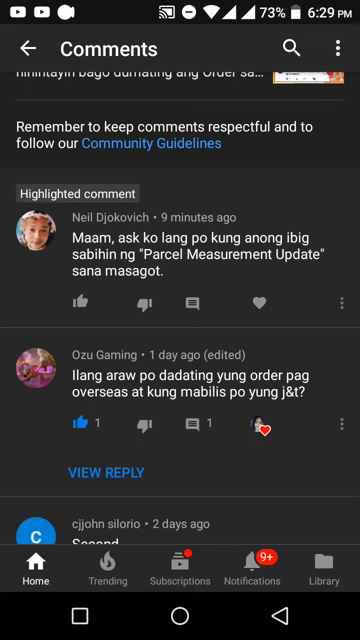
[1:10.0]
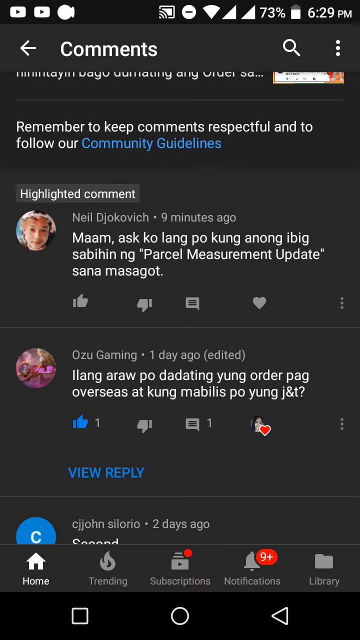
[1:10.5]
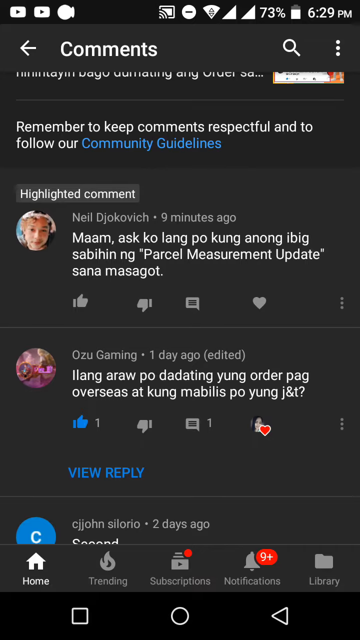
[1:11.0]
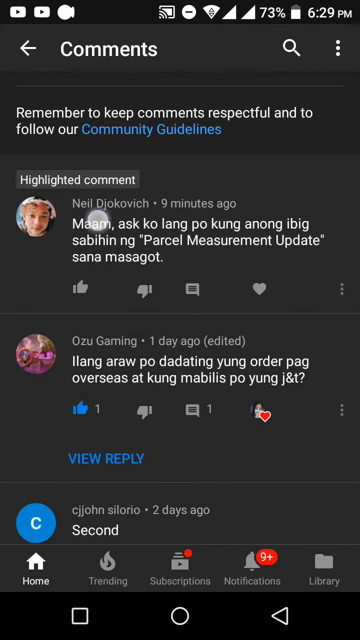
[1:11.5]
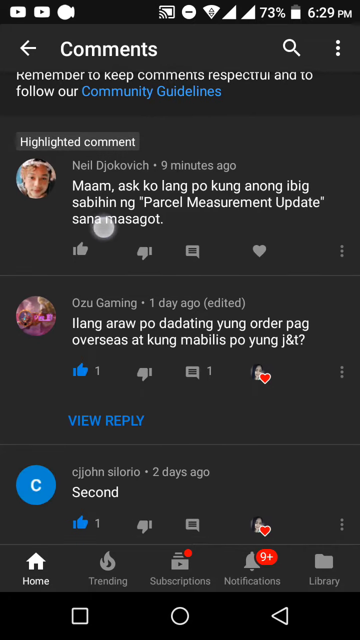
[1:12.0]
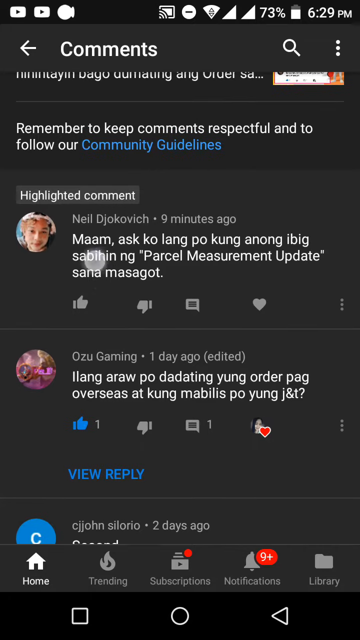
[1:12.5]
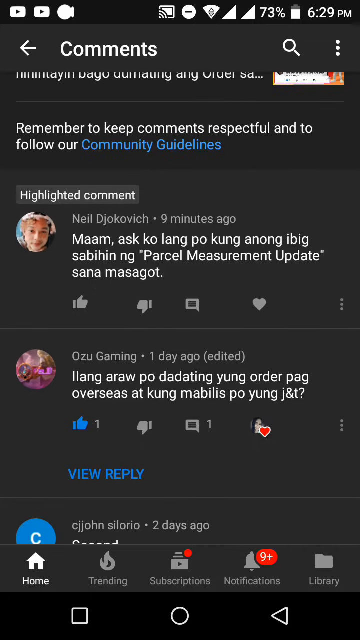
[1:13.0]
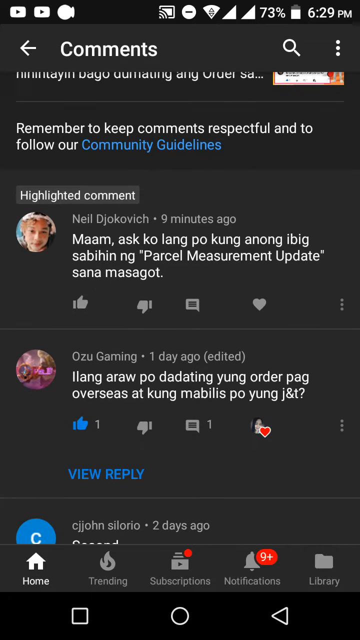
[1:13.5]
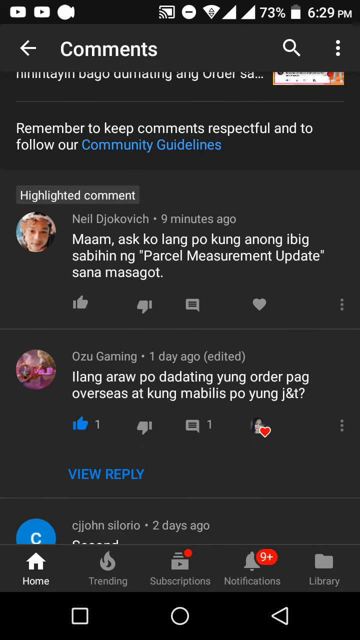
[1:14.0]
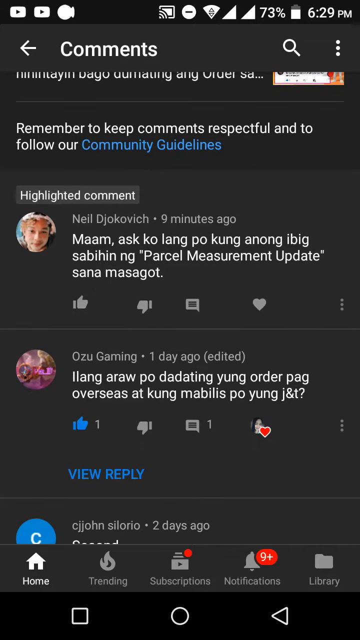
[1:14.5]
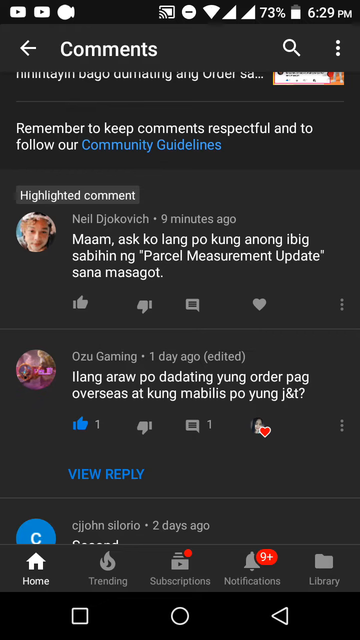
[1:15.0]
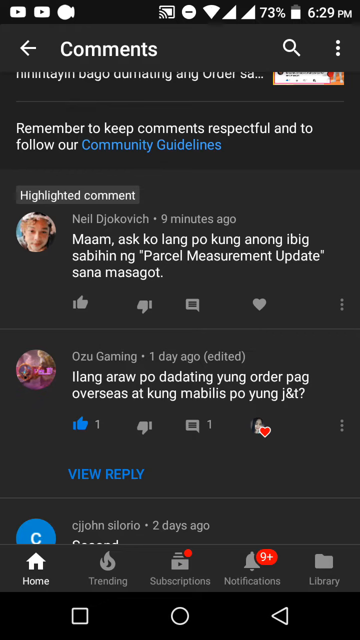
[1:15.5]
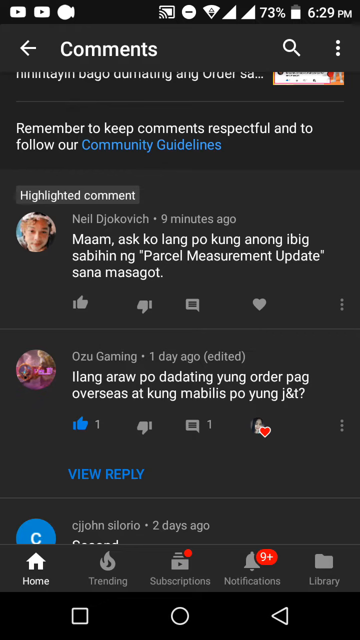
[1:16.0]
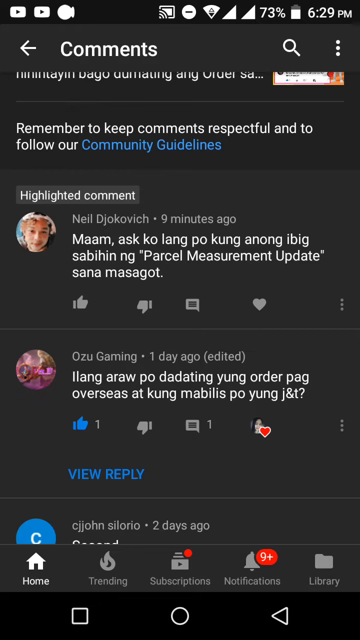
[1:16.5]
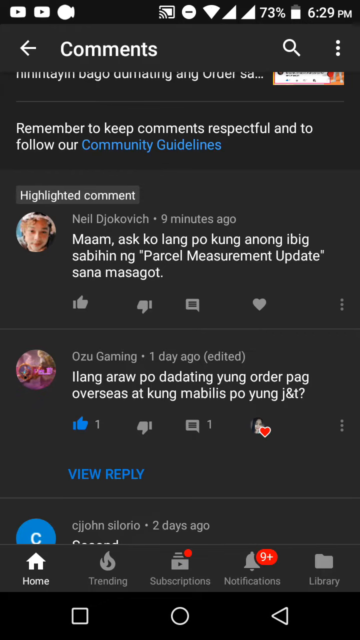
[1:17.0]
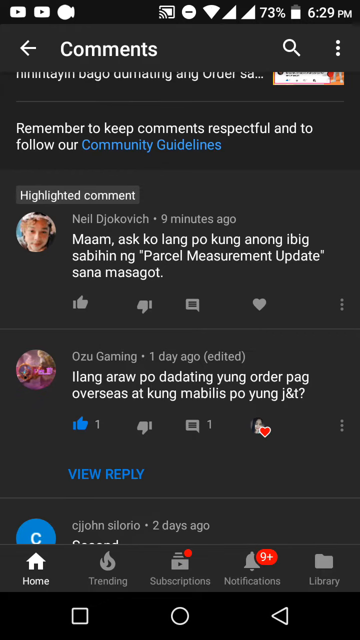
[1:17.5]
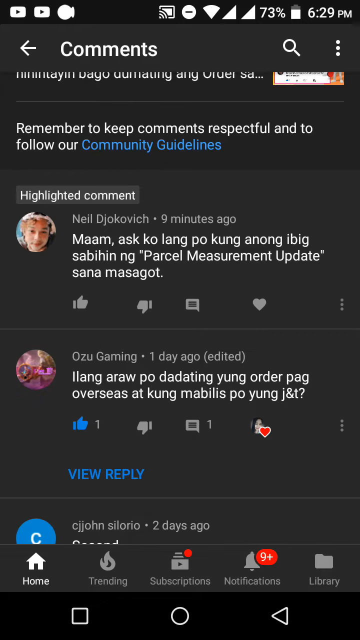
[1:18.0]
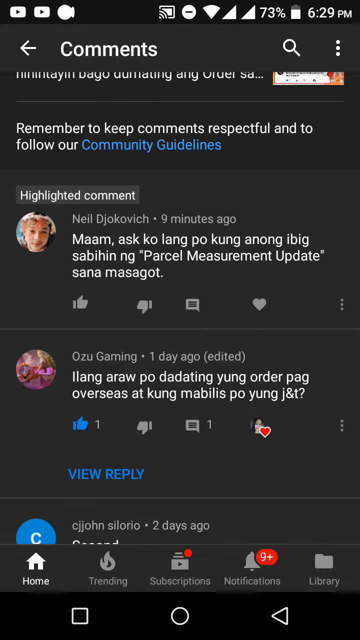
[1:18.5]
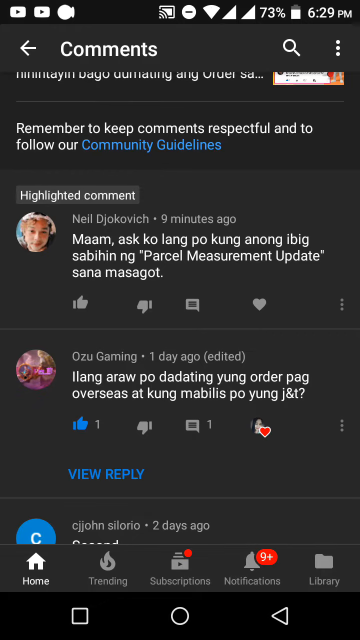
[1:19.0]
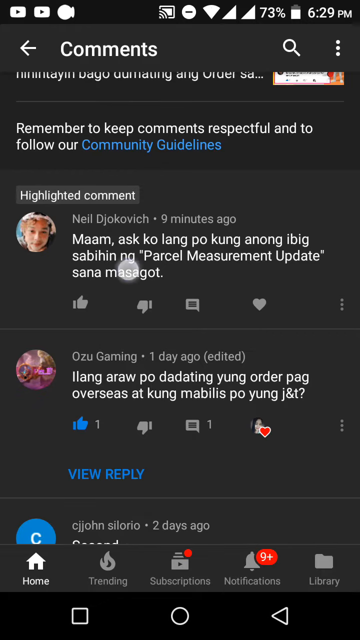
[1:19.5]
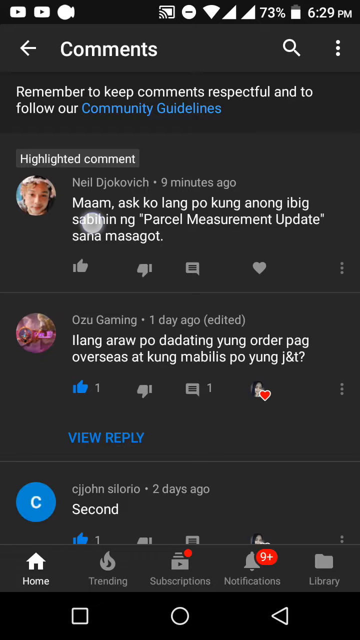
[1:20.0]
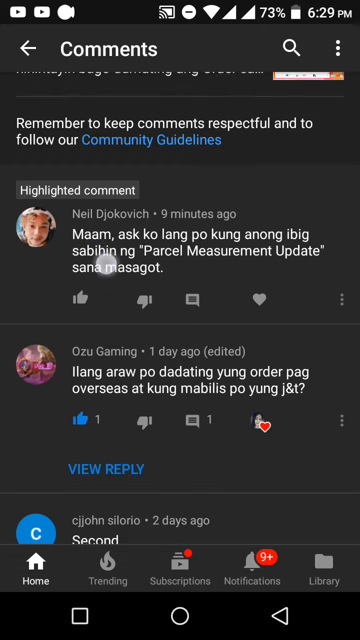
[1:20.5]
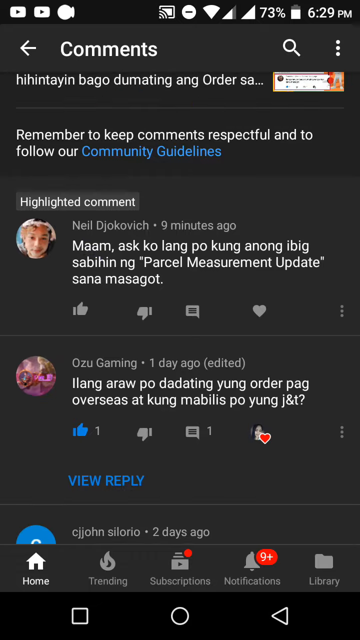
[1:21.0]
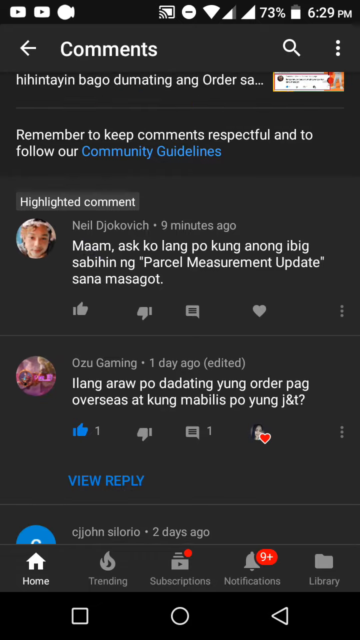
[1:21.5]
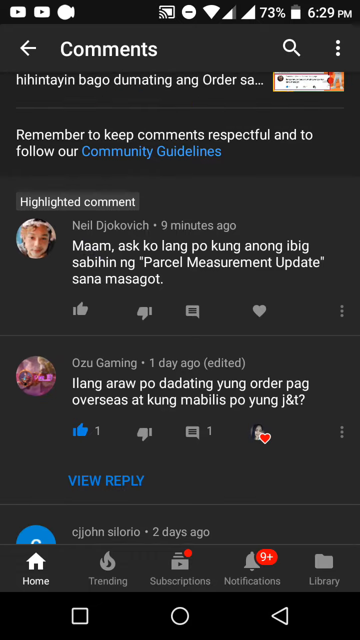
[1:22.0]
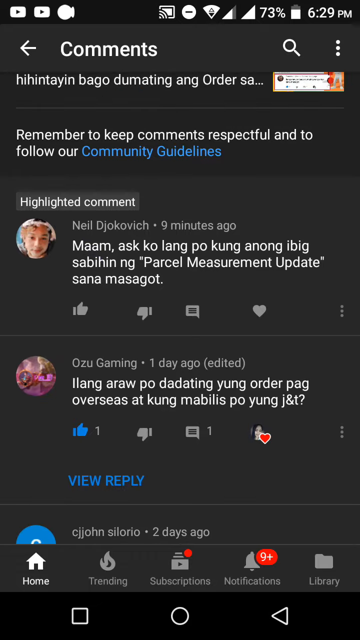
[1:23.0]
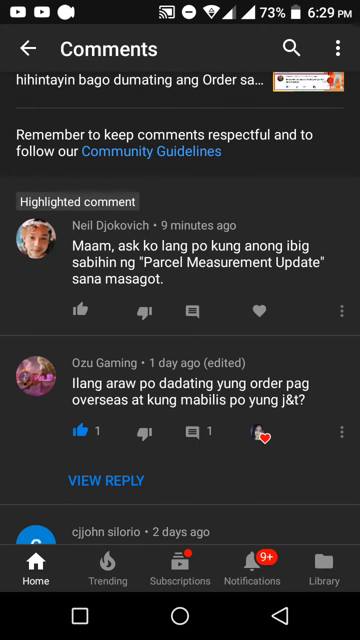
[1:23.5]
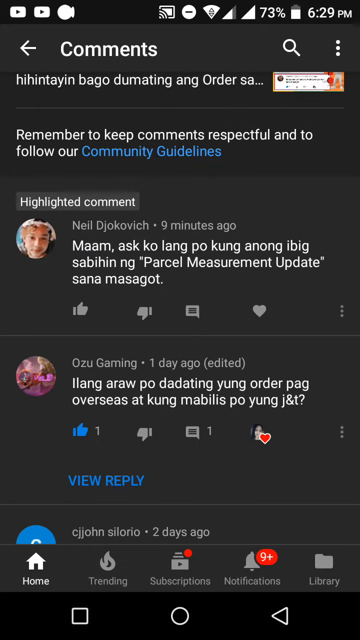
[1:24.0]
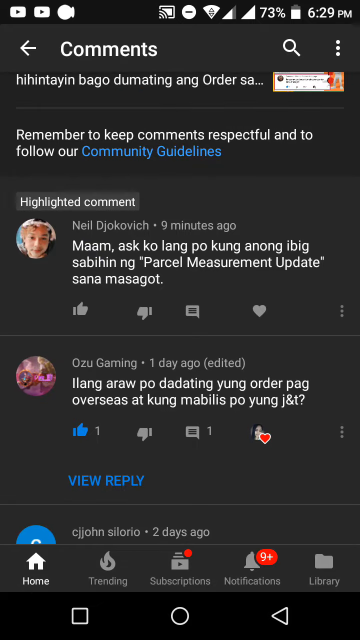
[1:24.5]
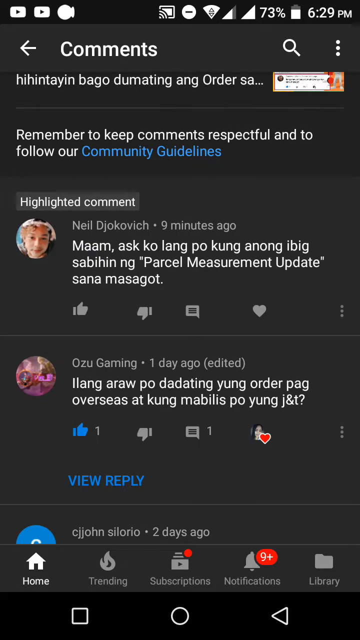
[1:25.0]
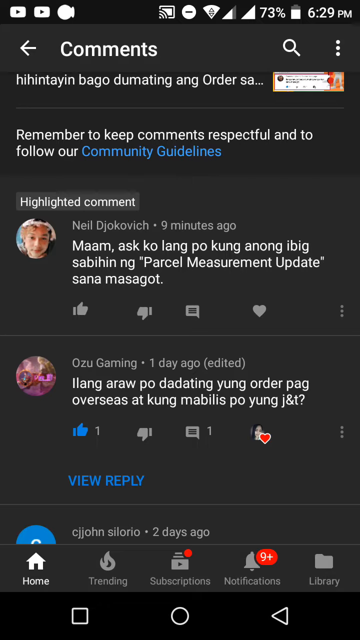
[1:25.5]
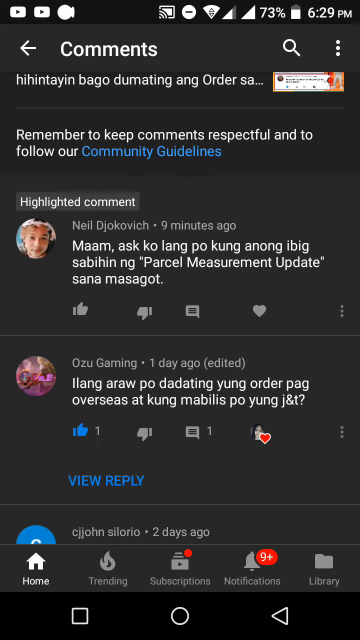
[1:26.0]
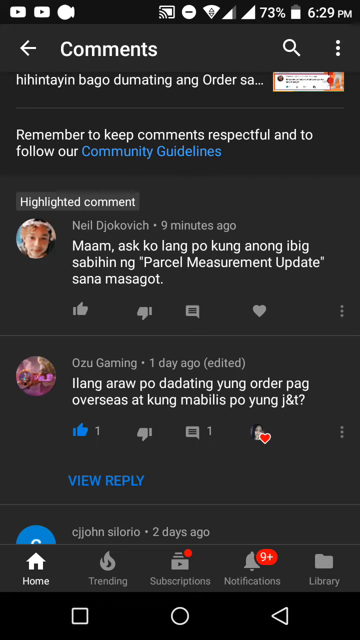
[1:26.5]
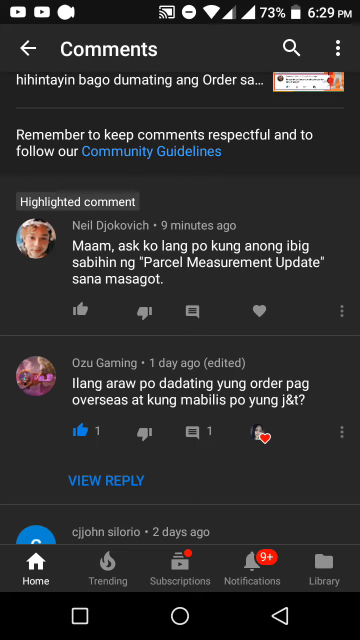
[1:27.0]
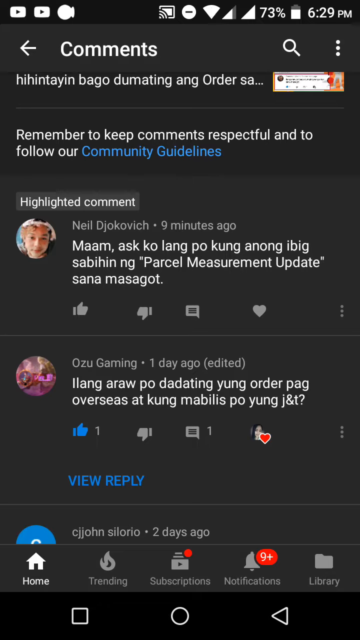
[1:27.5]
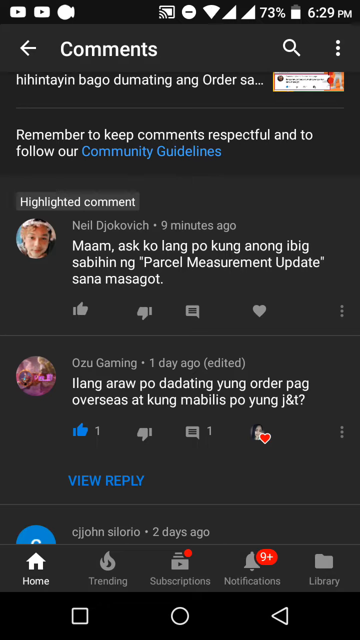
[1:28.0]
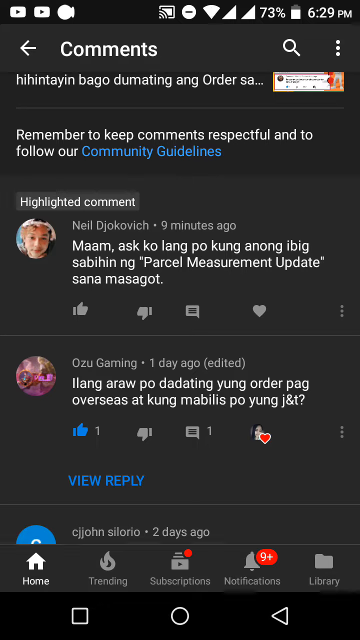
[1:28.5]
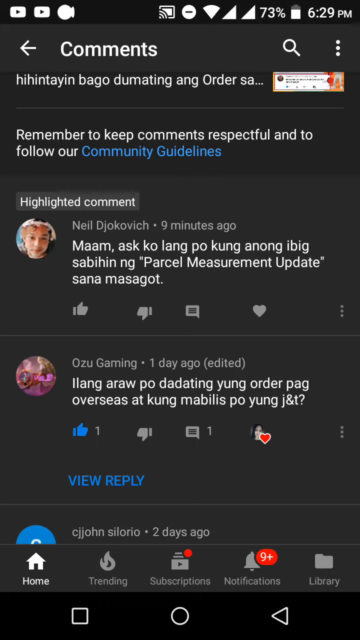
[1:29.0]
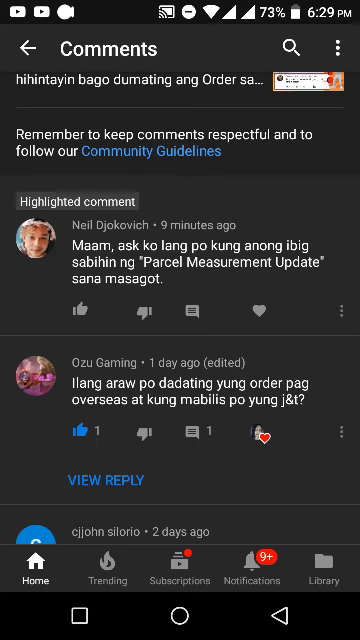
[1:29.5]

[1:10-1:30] A dark gray mobile device screen shows comments written in white text. At the upper left, "comments" is written in large white text with a back arrow to its left. Two comments are visible. The upper one, a highlighted comment, is from Neil Djokovic from nine minutes ago, written in a foreign language. Below it is another comment from a user named Ozu Gaming, posted one day ago and edited, also in a foreign language. Below that, "View Reply" is written in capital blue letters. A white round mouse tracker or cursor scrolls the screen up just a little and then drags it back to the normal position. The cursor repeats this motion twice.